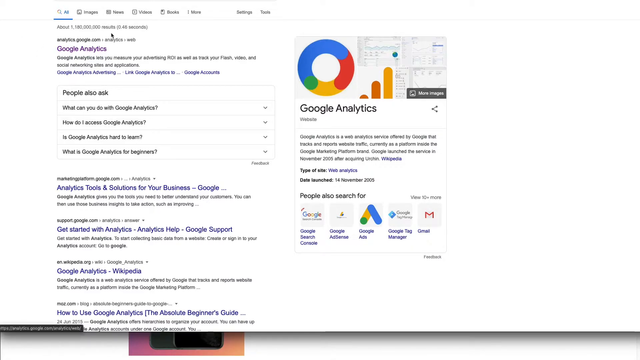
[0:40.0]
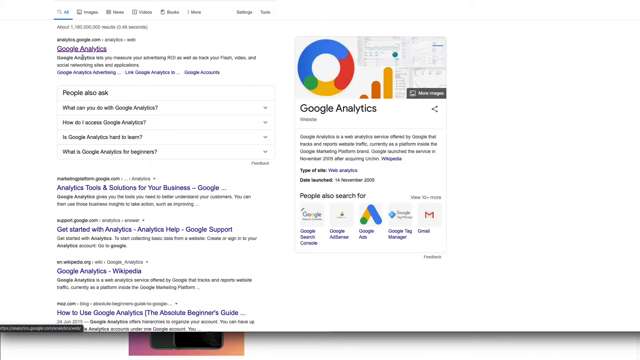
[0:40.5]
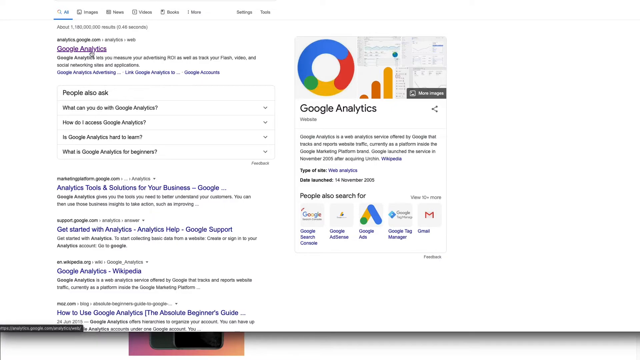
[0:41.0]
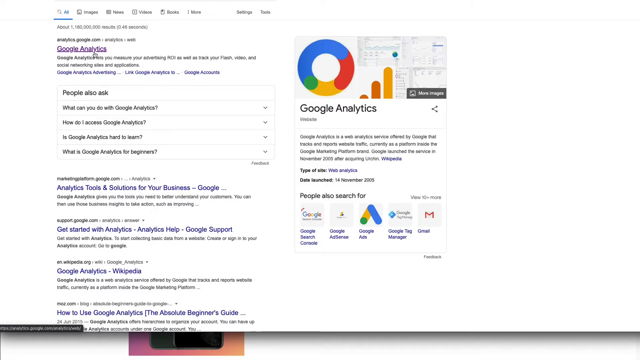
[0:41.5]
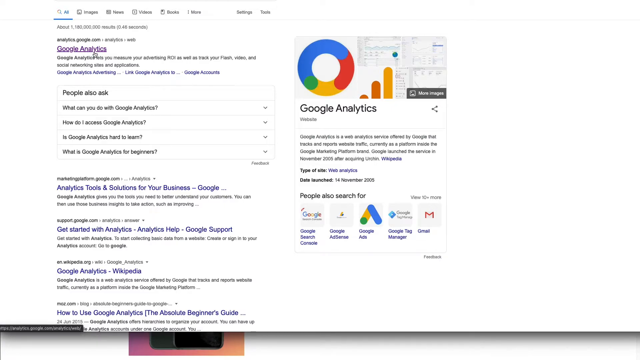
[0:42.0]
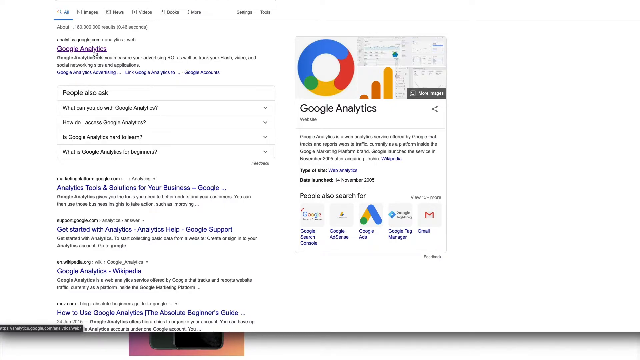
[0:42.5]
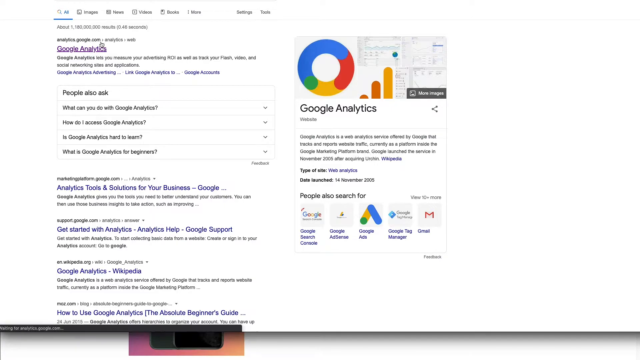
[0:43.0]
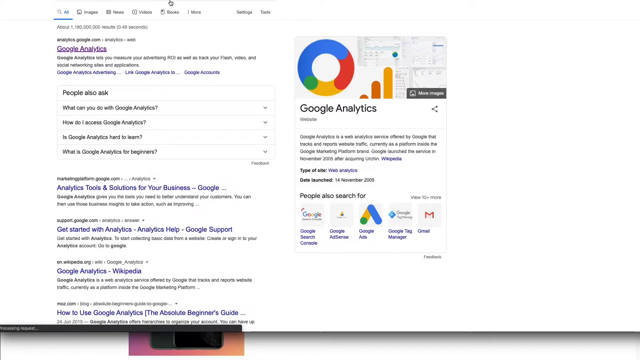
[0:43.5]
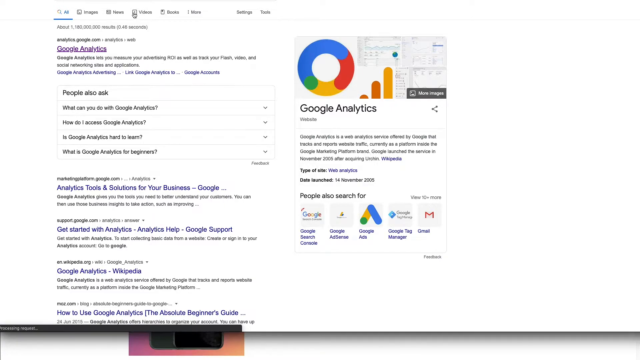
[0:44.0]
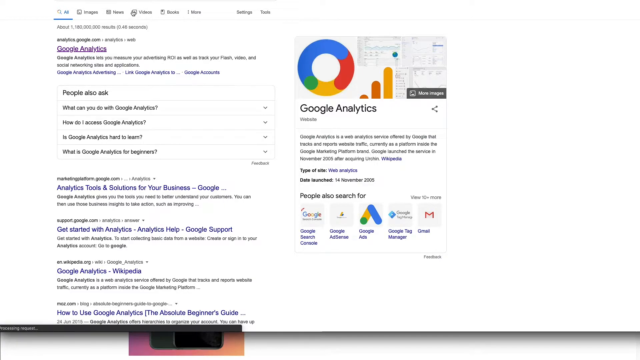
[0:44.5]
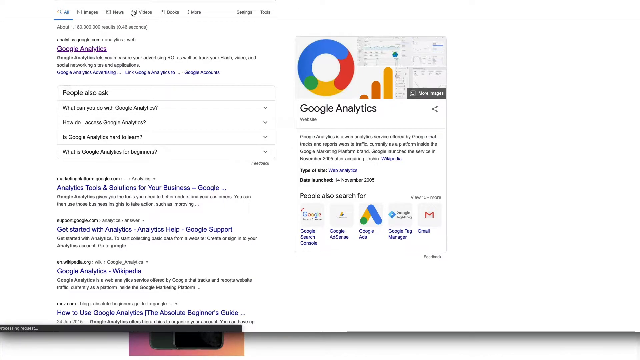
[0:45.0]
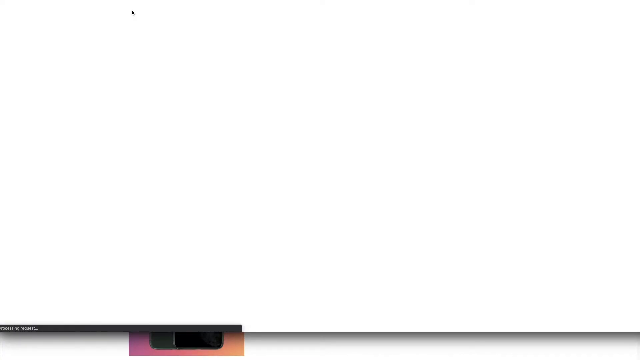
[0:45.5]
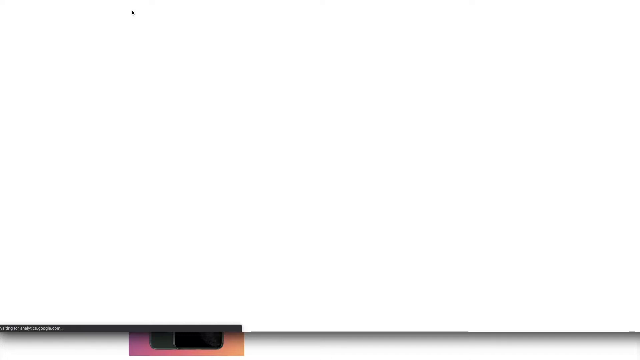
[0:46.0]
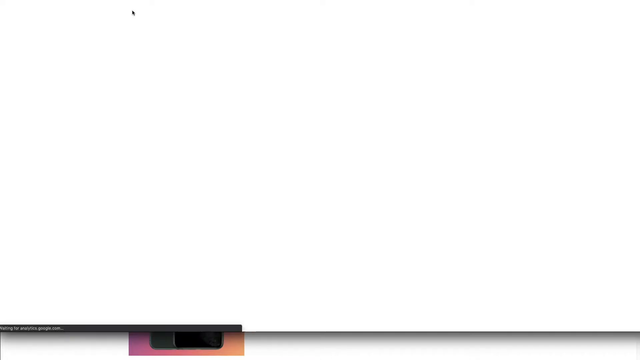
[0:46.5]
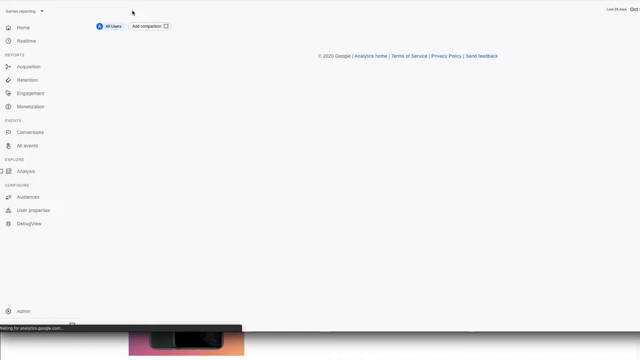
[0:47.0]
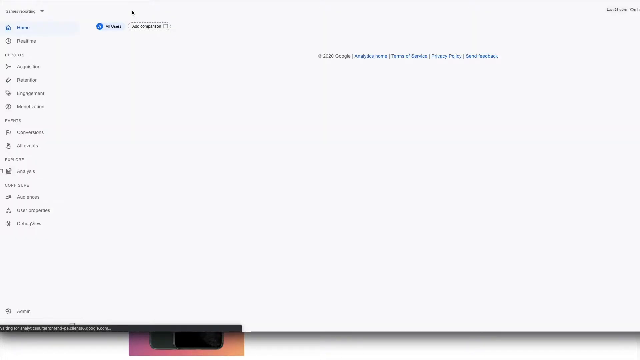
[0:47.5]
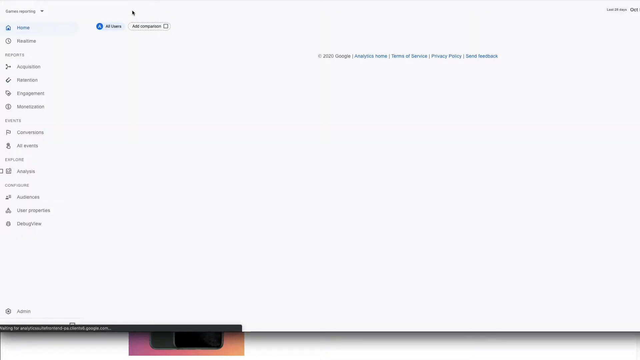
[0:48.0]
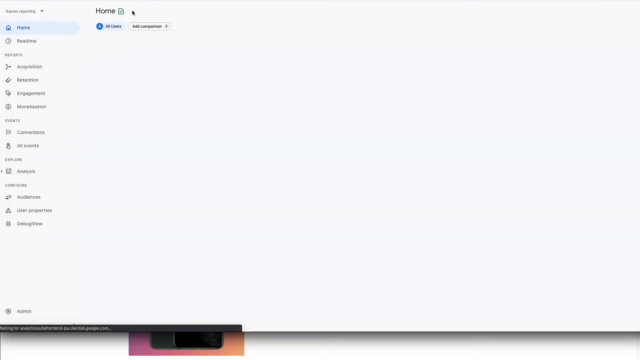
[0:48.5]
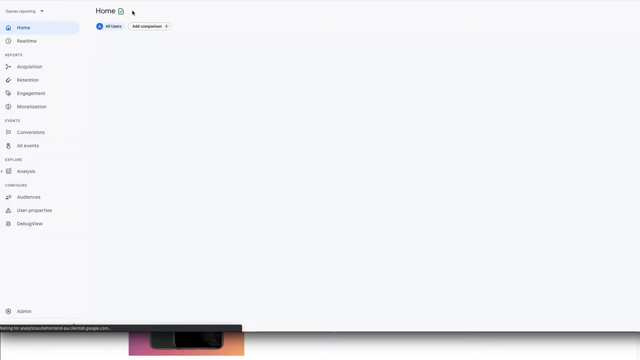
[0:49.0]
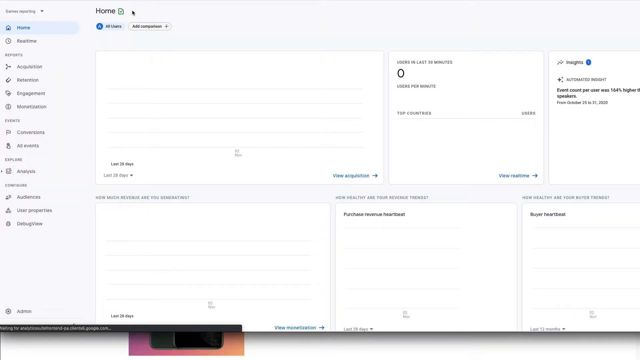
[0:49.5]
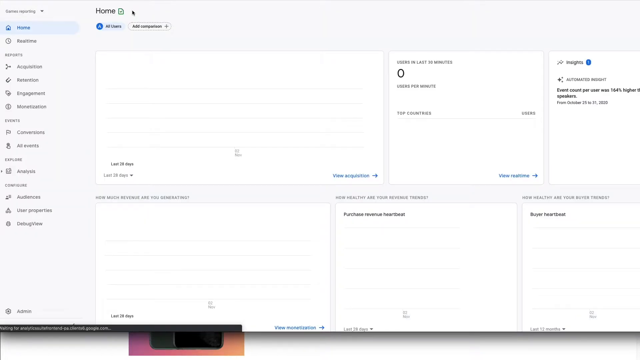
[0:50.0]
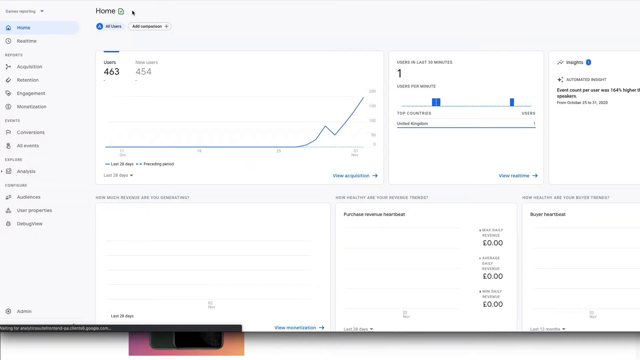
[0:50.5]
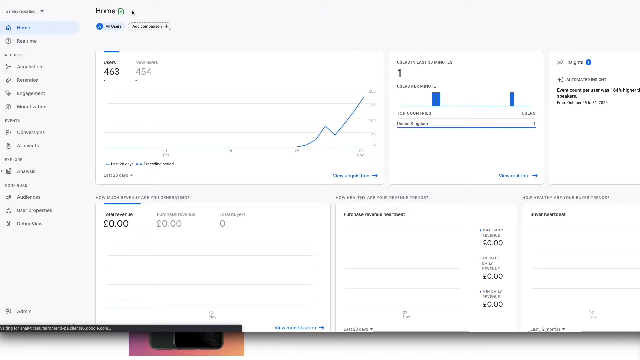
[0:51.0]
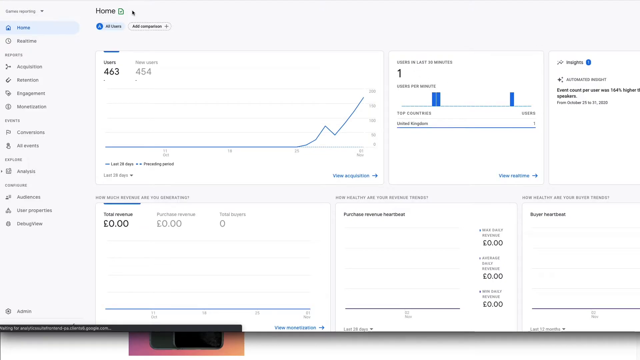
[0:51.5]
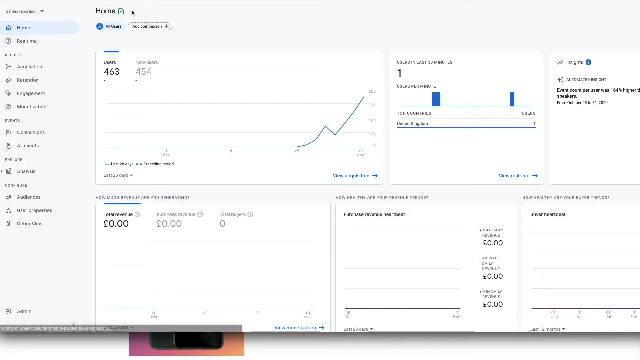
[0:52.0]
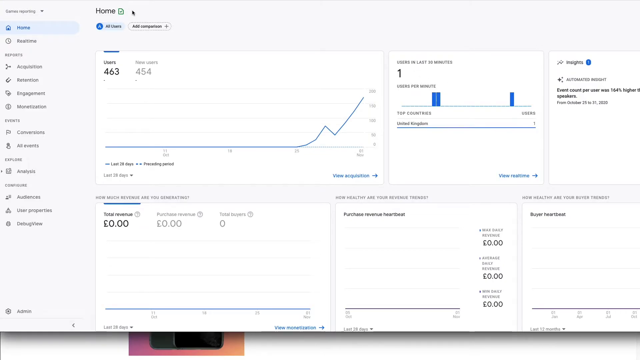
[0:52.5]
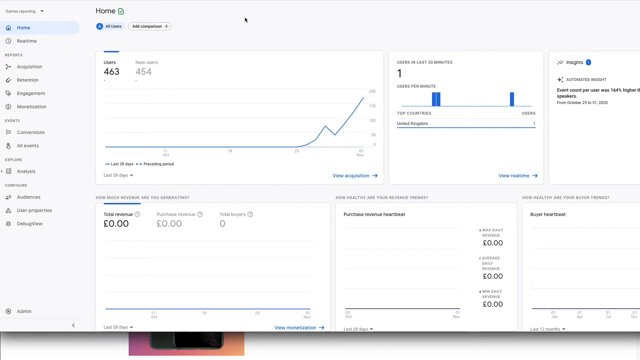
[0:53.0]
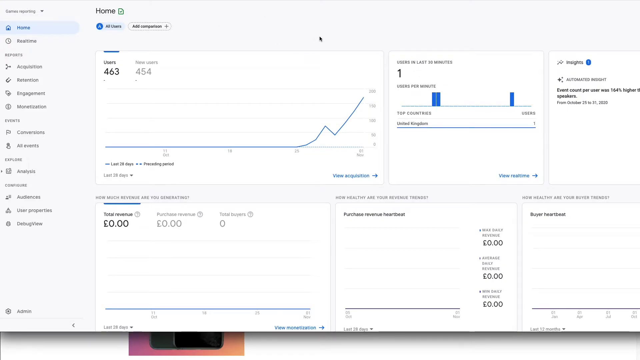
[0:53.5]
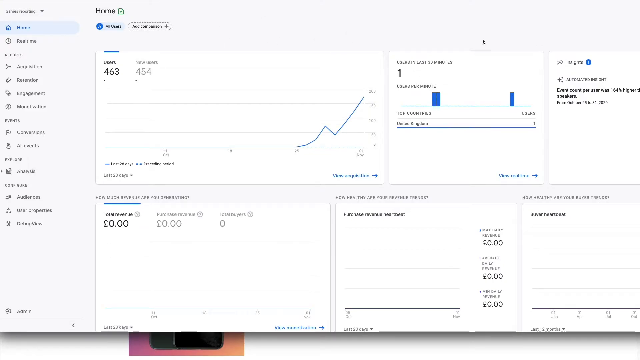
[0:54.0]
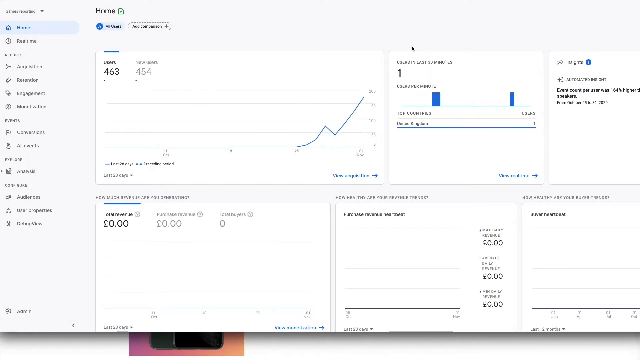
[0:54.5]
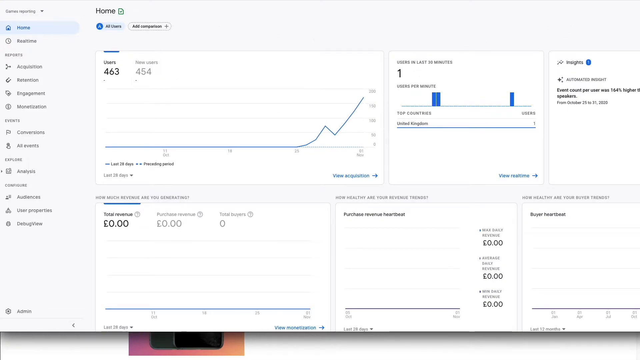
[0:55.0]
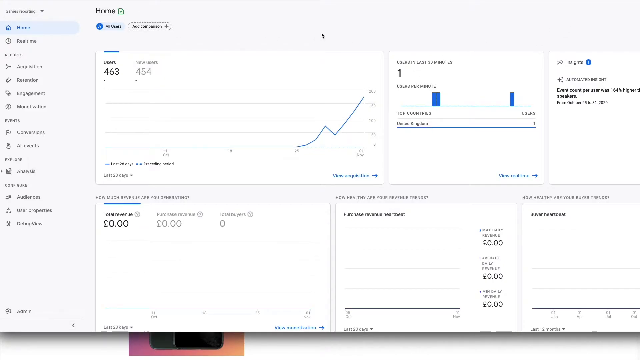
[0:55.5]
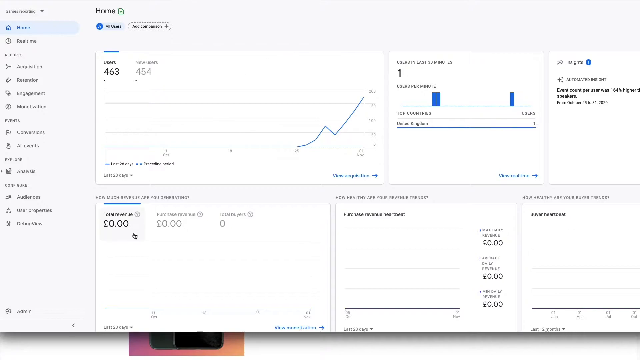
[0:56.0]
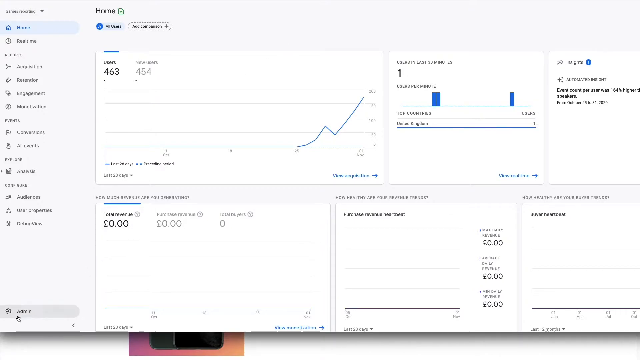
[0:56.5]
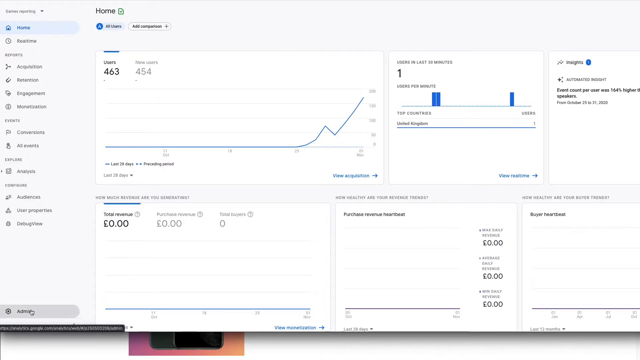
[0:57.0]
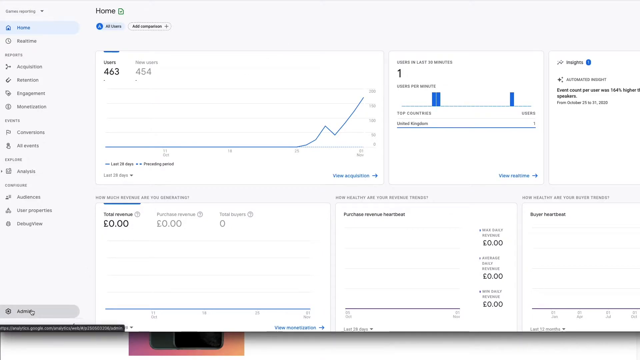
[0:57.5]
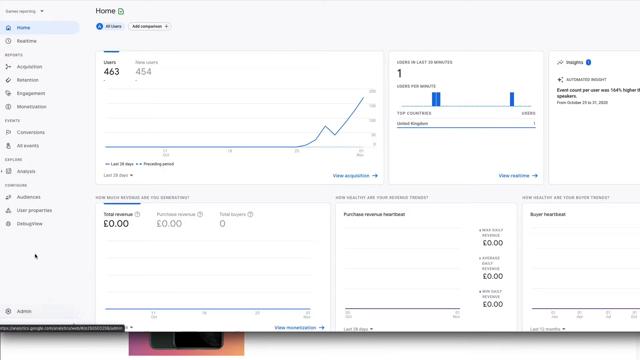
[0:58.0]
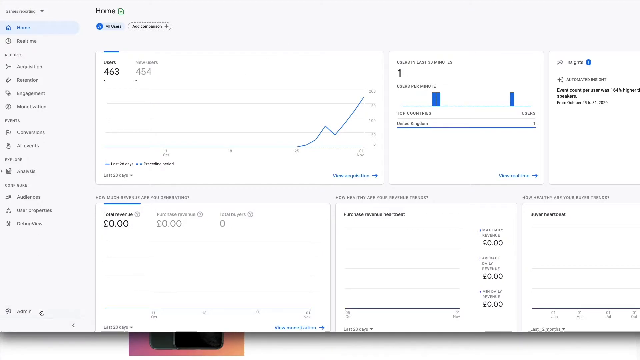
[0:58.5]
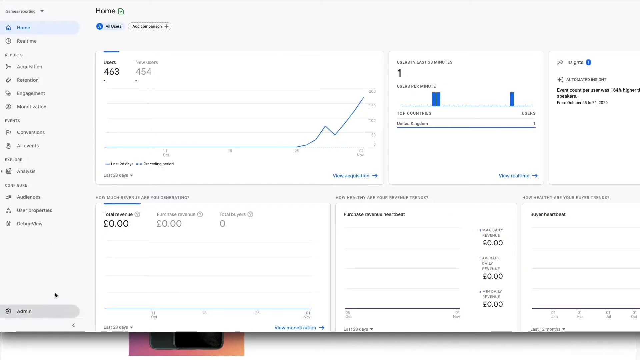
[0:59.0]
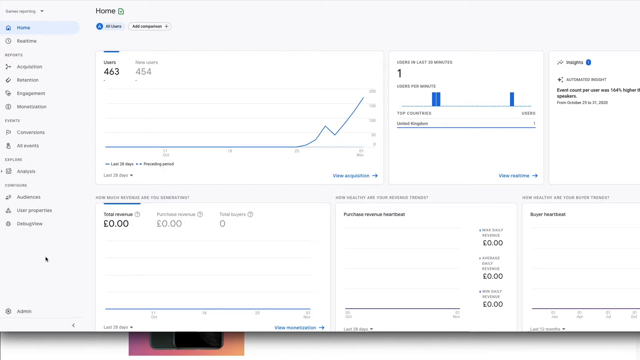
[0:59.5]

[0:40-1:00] The person clicks on Google Analytics, then on the video option, which brings up a number of options or images in the active window. A menu is on the left side, and the home screen is currently selected. Other menu items apparently include real-time, acquisition, retention, engagement, possibly notifications, all events, analytics, audiences and user properties; a few items are unreadable. Graphs show the number of users, 463, and total new users, apparently 454. One graph seems to indicate the service started being used around the 24th or 25th, and the graph apparently covers the last 28 days; the grainy screen makes some numbers unreadable. There is an option to view acquisitions and apparently another to view users in the last 30 minutes. A list of top countries shows the United Kingdom. There is an option for insights, and beneath it text reads "how much revenue are you generating?" Total revenue is zero, what appears to be purchase revenue is zero, and total buyers is zero. With no data, no graph is shown. Further items include purchase revenue, with a final word that cannot be read, and one for the buyer.